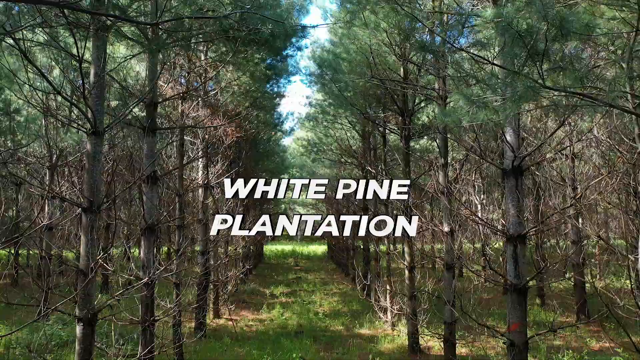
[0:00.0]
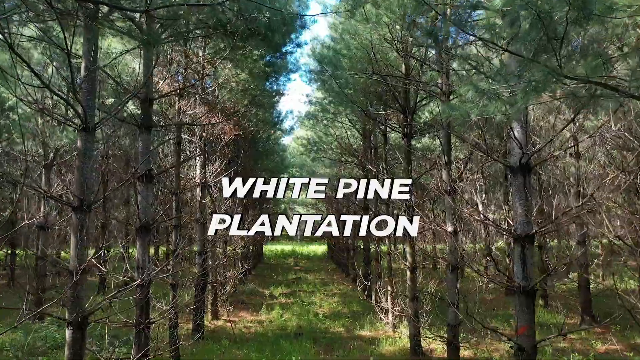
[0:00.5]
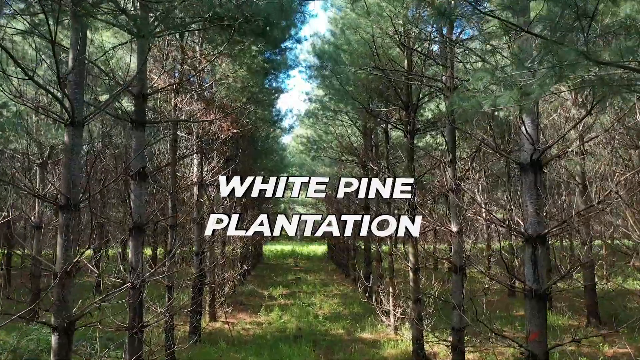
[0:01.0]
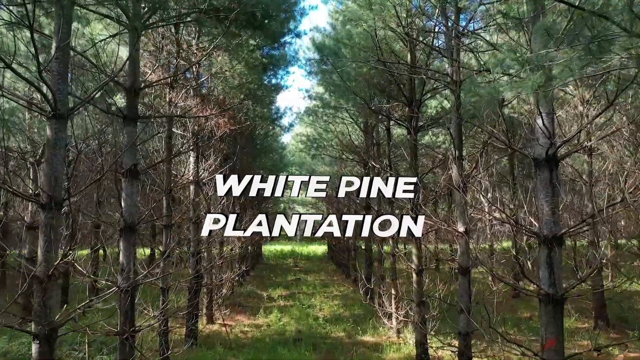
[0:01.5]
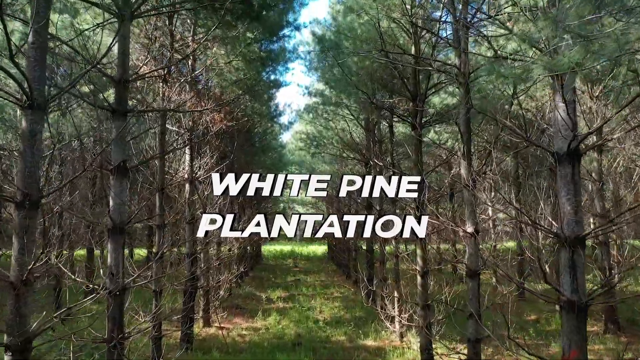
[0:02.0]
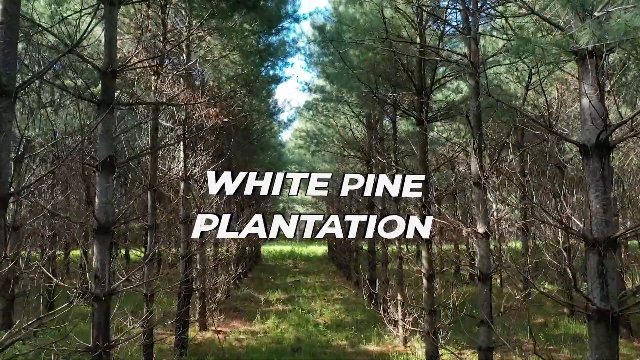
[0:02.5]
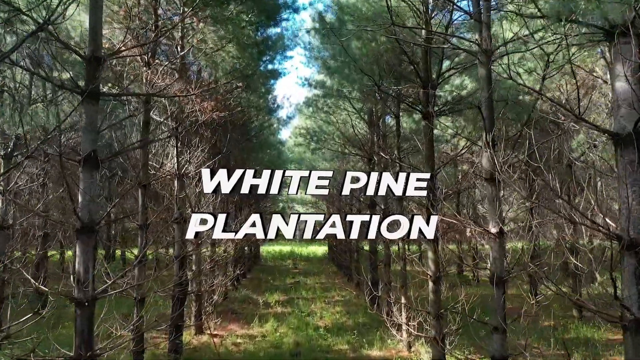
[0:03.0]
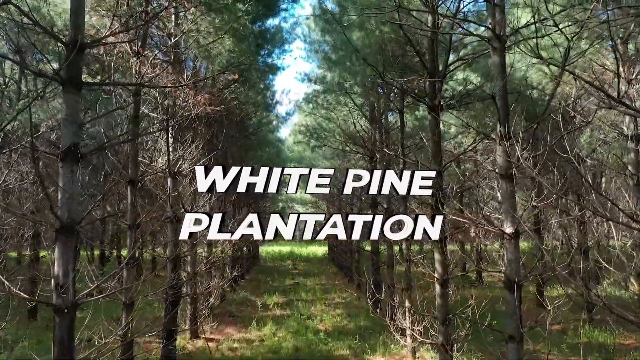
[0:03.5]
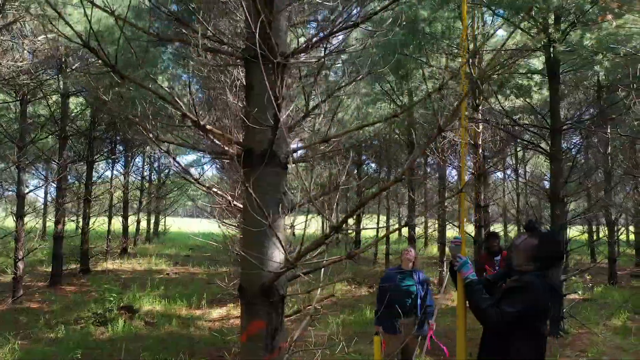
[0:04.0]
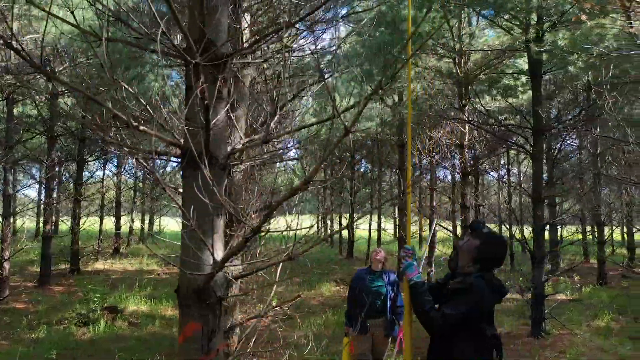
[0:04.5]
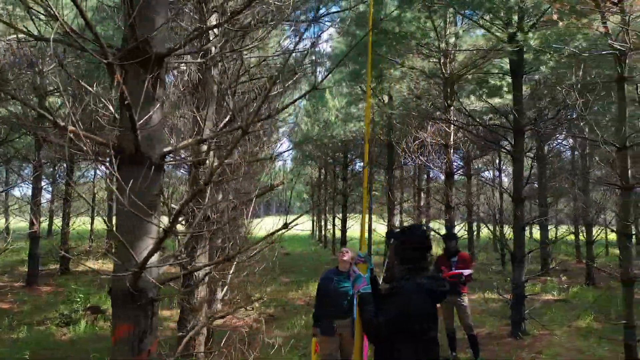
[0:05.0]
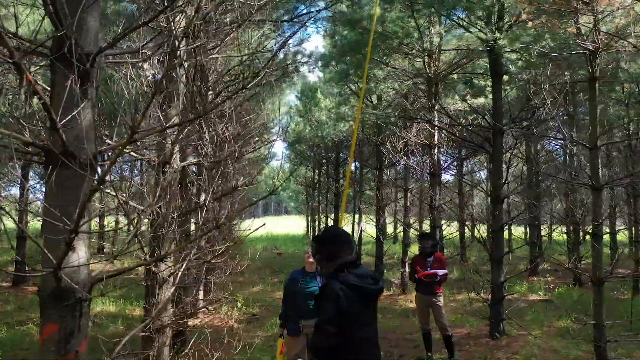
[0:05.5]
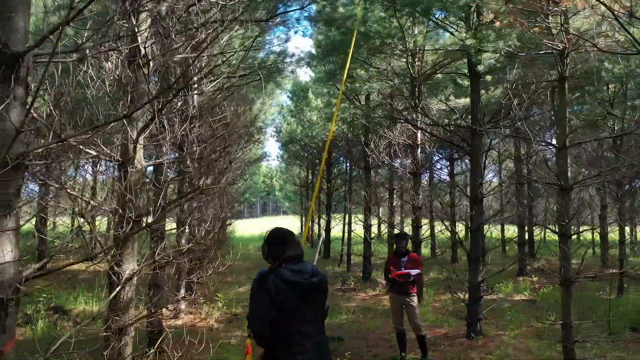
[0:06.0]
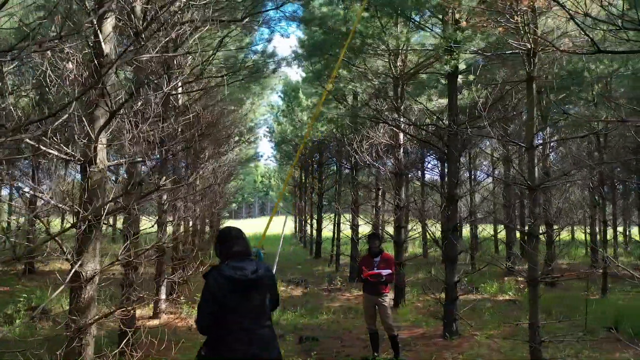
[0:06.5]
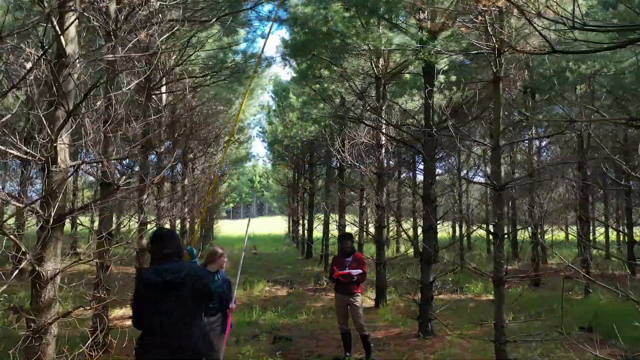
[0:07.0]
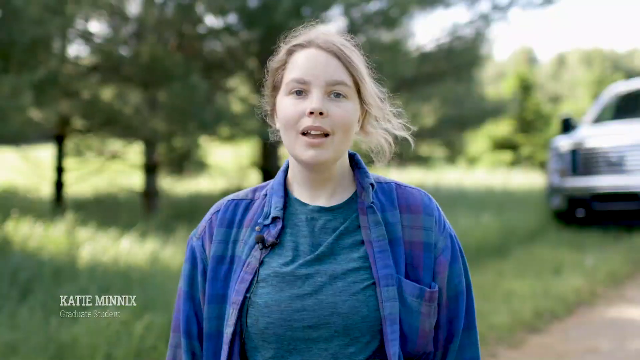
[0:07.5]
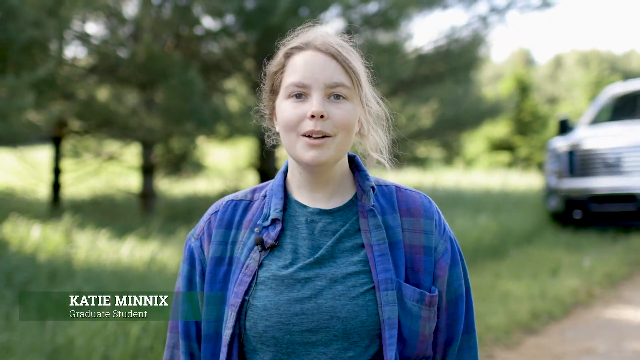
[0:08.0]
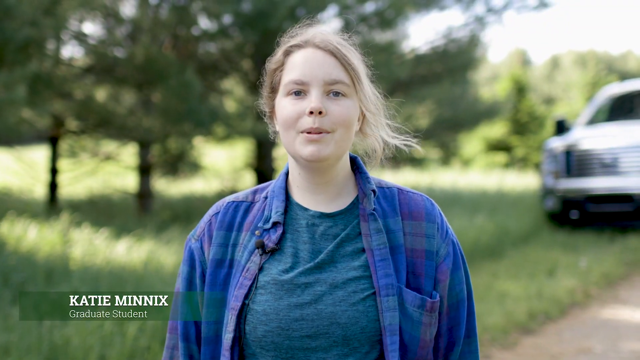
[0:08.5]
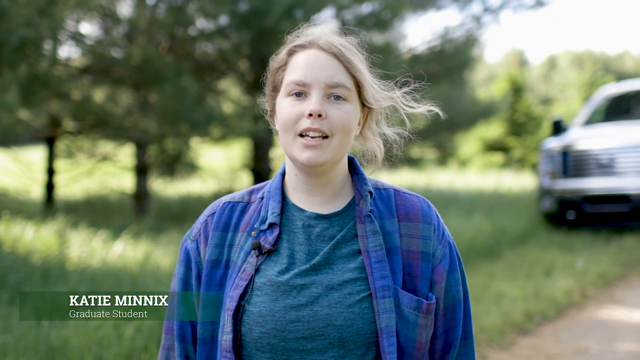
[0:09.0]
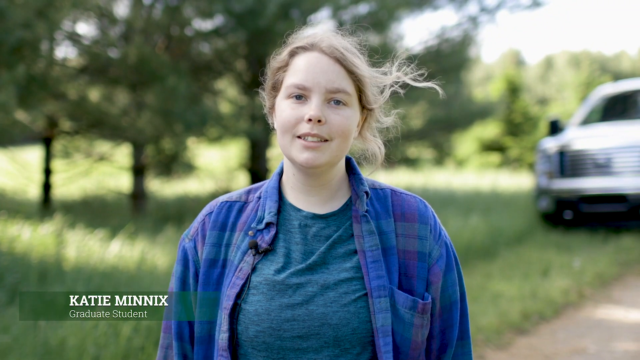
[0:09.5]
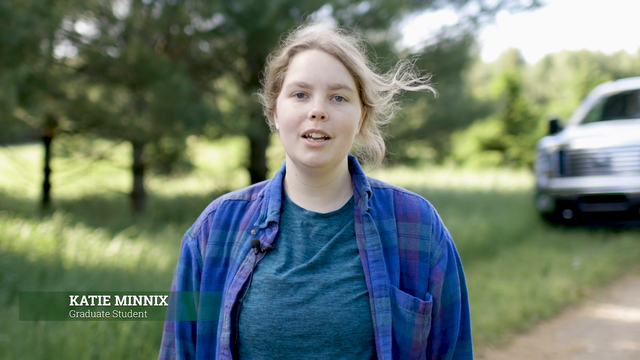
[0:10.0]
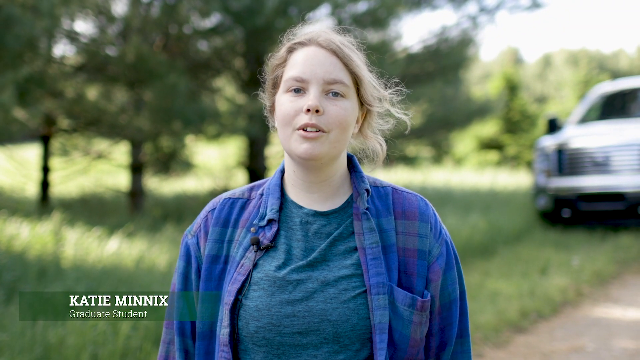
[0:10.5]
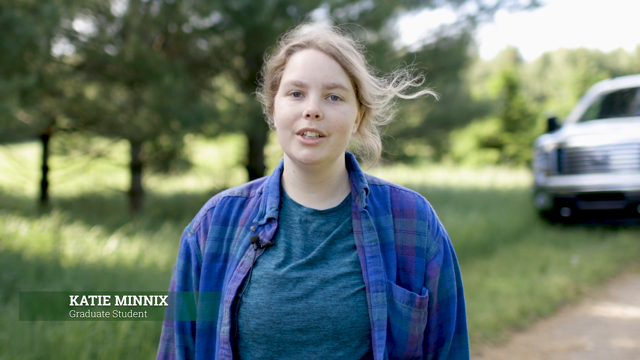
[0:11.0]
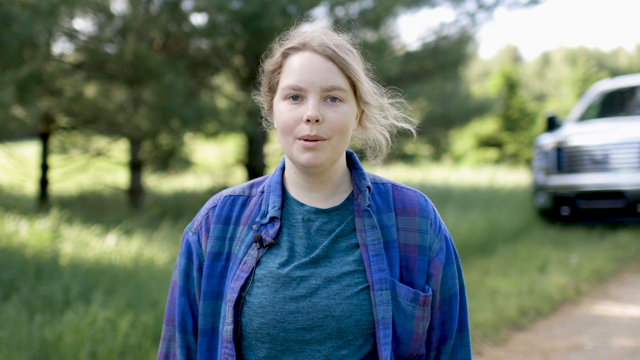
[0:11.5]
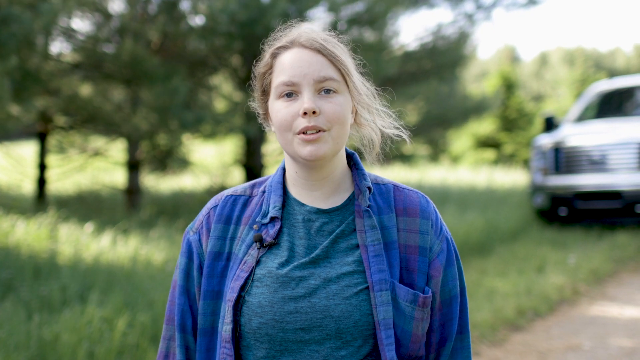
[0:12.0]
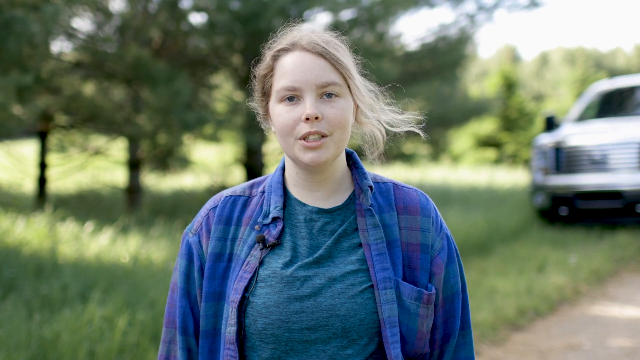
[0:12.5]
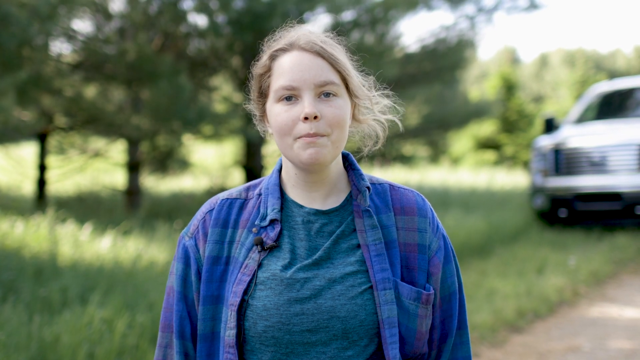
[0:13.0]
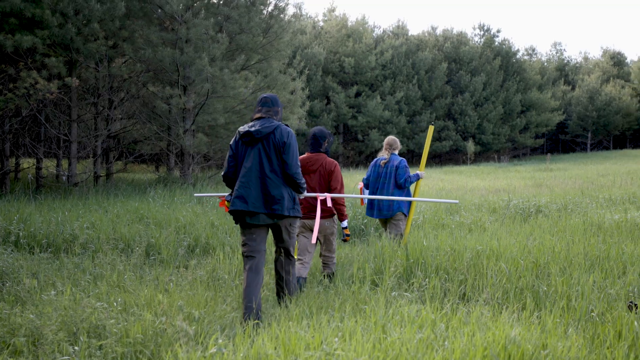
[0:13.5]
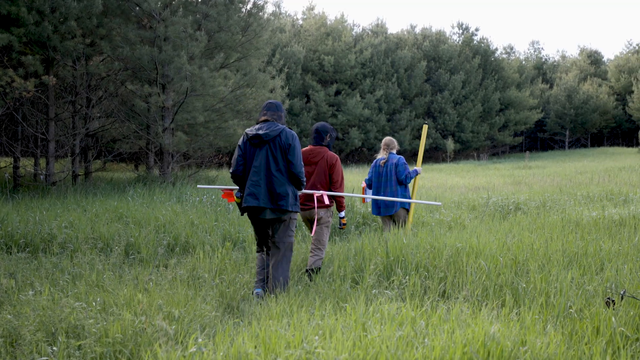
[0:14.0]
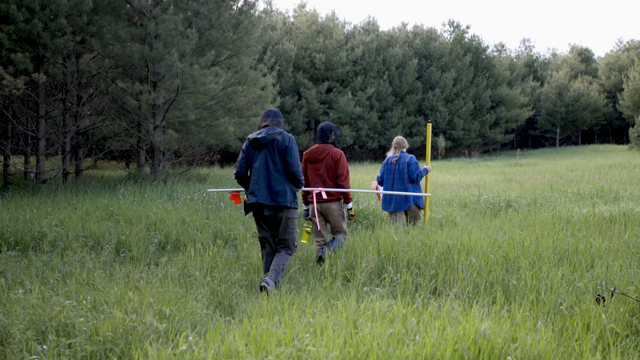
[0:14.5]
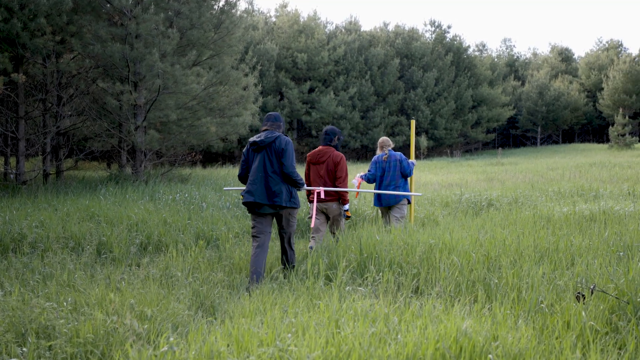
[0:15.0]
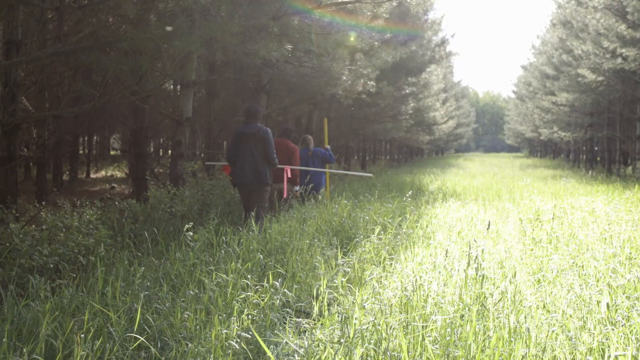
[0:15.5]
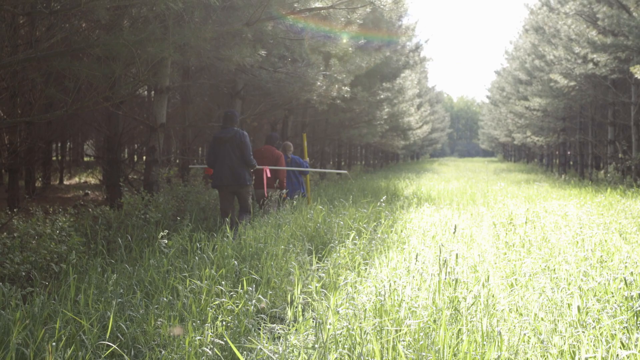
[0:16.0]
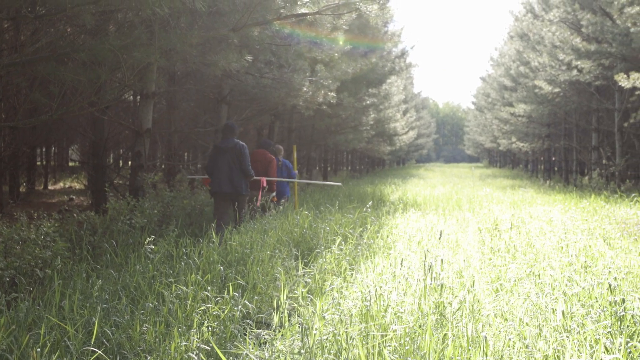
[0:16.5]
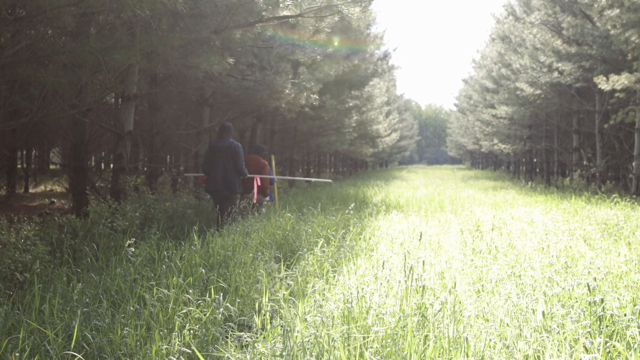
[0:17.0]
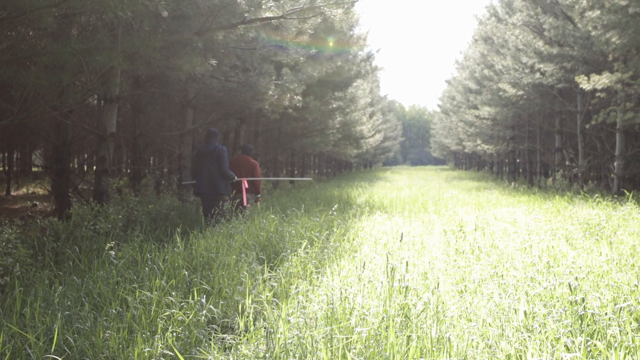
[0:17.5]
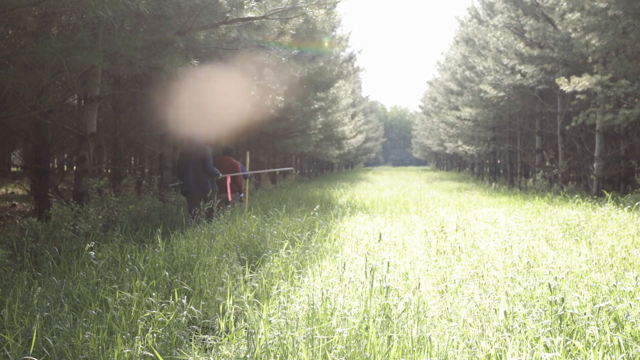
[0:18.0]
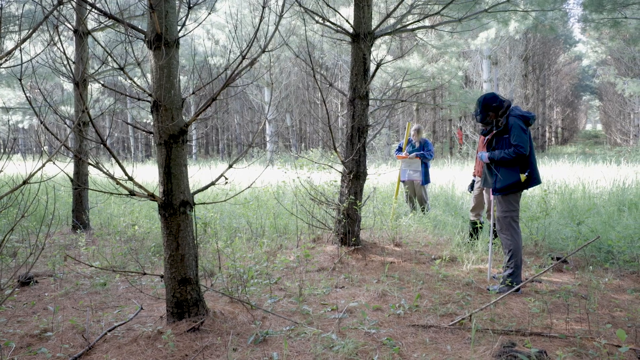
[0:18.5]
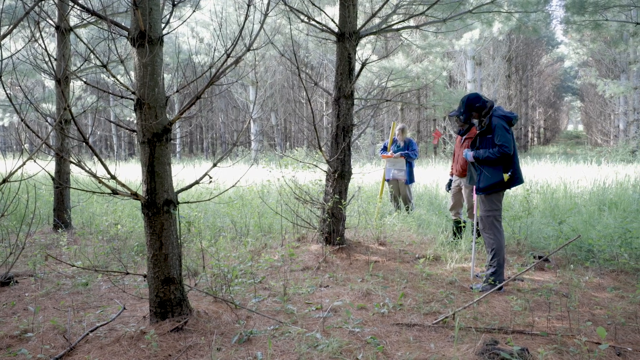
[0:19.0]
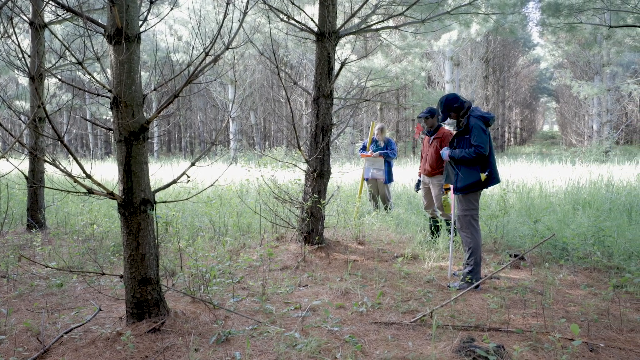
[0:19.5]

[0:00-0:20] A grassy pathway runs downward, away from the viewer, with rows of trees on the left and right. In the middle, white text reads "white pine plantation." The view moves forward along the path and the text moves toward the viewer. The video then transitions to rows of these trees, where three people are present: one holds what looks like a very long yellow ruler upward, and the other two are looking around. Next is what looks like a woman being interviewed. She is white, a little chubby, with blonde hair blowing toward the right, and she wears a blue button-down shirt with a microphone over her right collar. Green and trees are in the background, and at the bottom left white text shows the name "Katie Mannix" and "graduate student." She keeps talking to the viewer. The scene changes to a grassy field with trees on the left, where three people walk away from the viewer and toward the right; the one in front, a woman, holds a long yellow stick, and the one in the back holds a white stick horizontally. They keep walking in the same formation, now along what looks like a very wide grassy route with very long grass and trees on the left and right. In another scene, the three people look to the left at a tree in the middle, with two more trees on the left and in the background.